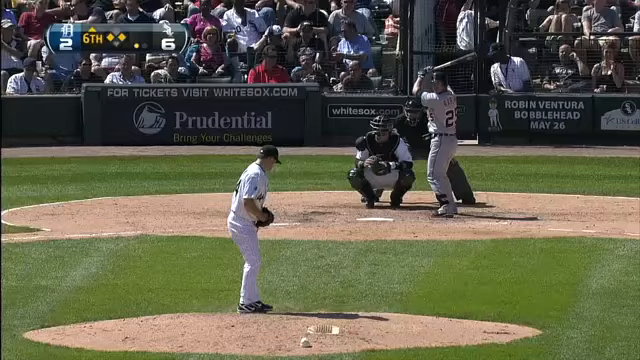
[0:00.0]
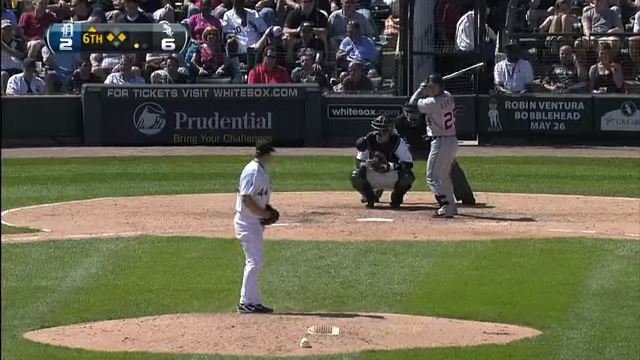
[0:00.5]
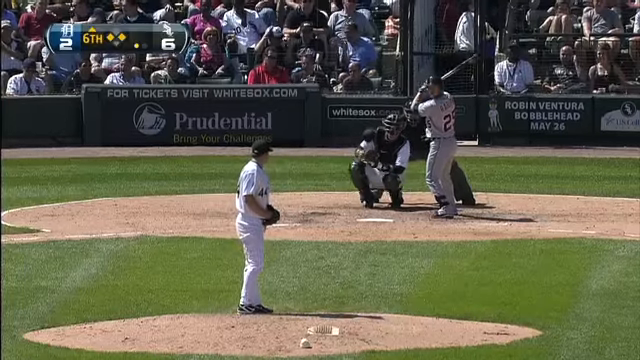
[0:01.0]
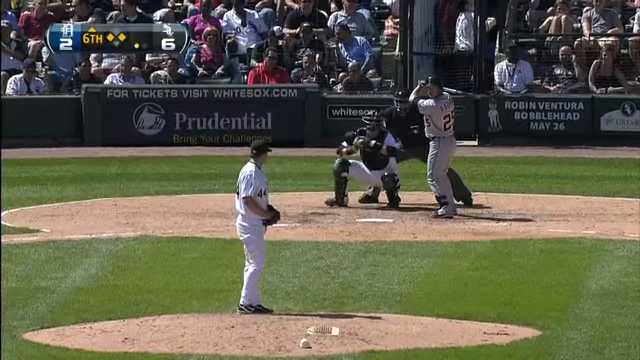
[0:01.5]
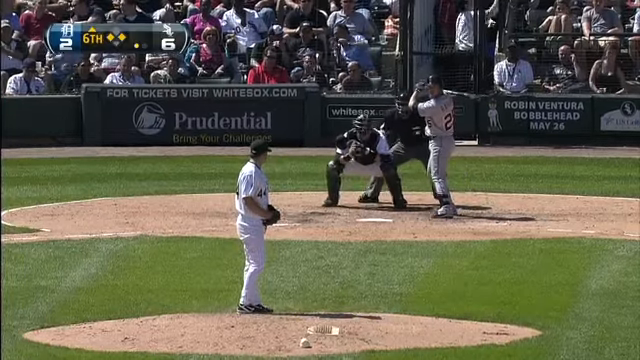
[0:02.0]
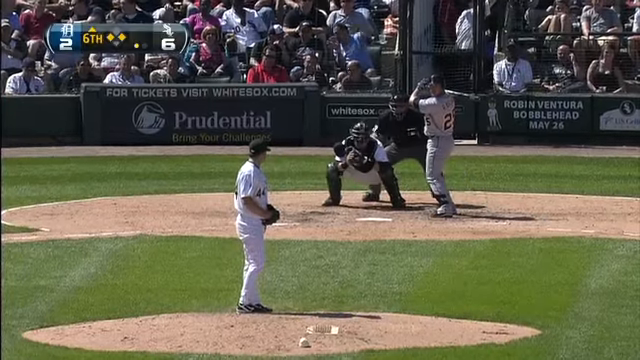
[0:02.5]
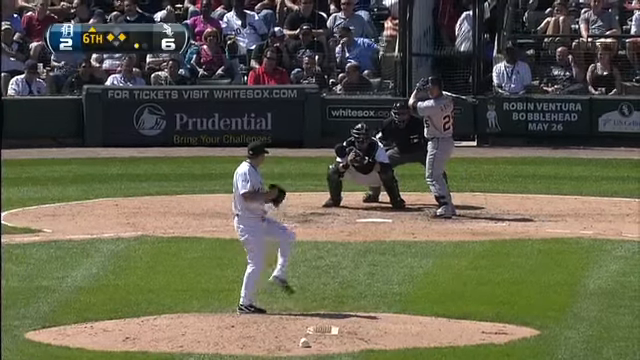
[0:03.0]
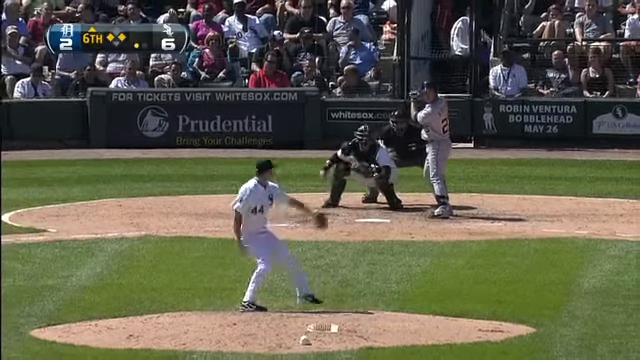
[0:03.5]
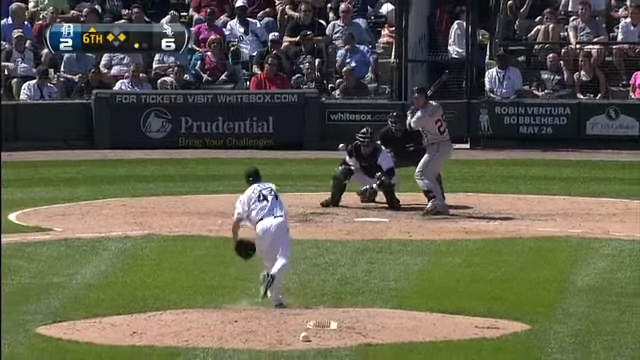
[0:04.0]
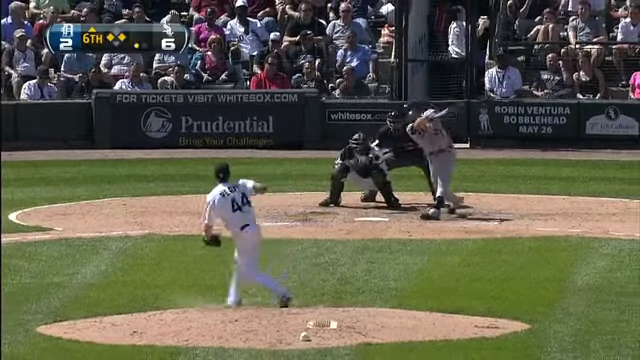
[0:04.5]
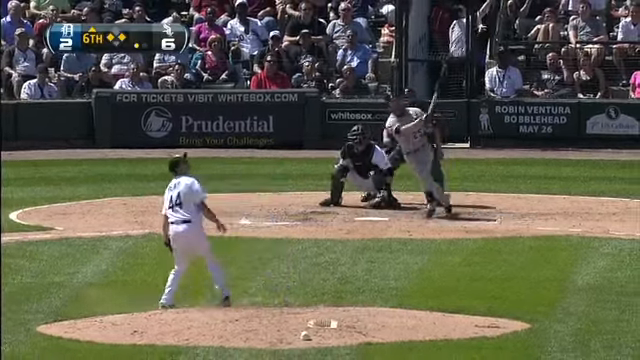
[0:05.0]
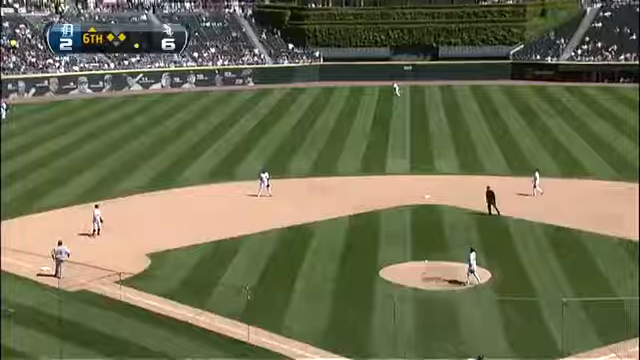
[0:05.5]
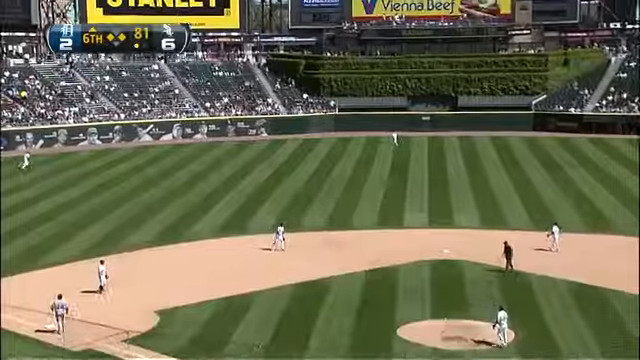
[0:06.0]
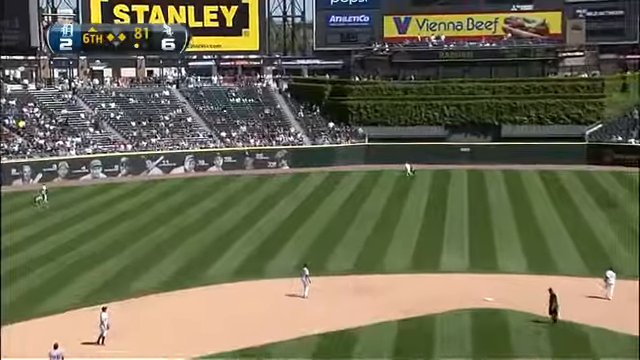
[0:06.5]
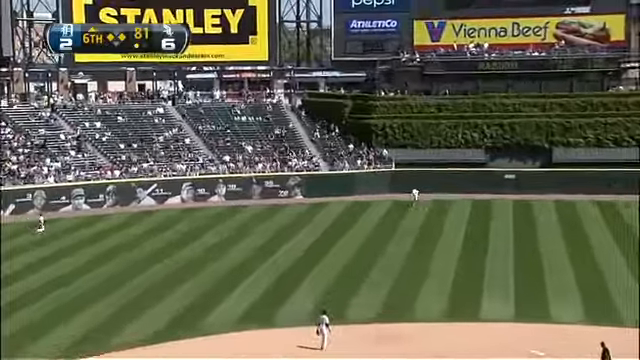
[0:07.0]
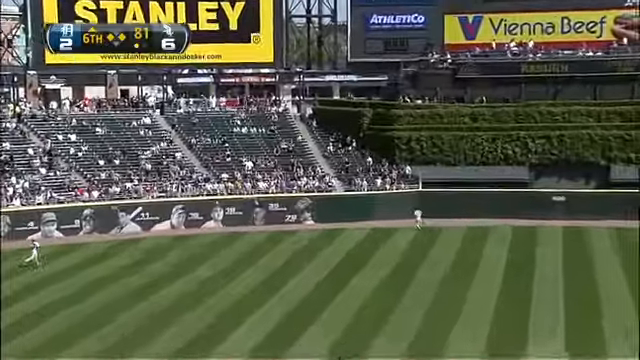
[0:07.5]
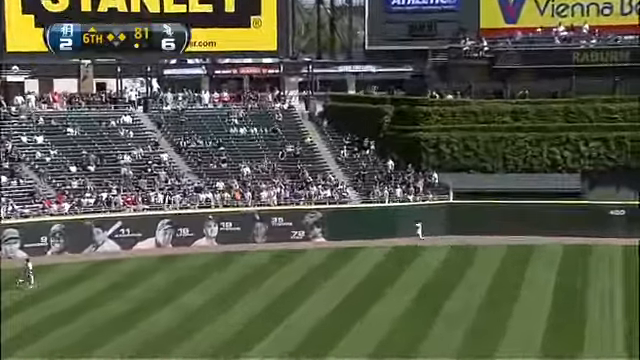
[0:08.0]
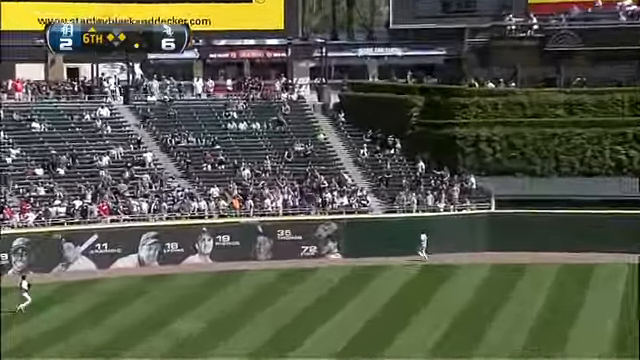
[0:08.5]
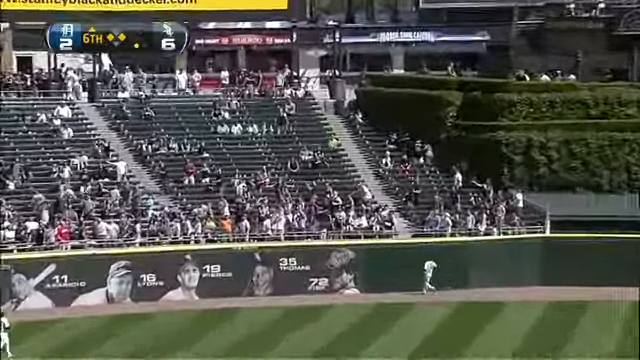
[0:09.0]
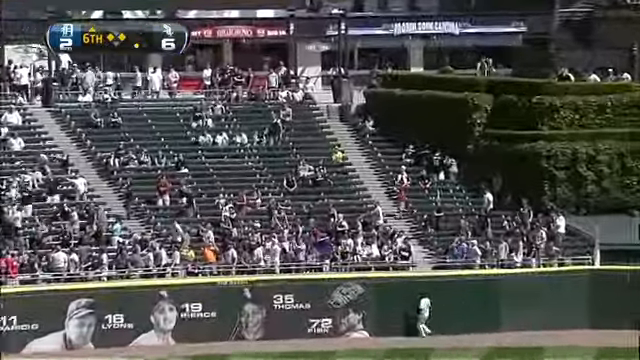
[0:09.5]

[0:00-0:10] Four males appear in the video, including a batsman and a bowler. The batsman hits the ball and it flies out of the field. The cricket field has green grass with patches of dust and sand. The players wear white gear: white long pants and white shirts. One player's shirt has the number 44 written in black on the back. They also wear white shoes as well as black caps and black shoes. It is a sunny day. The spectators sit watching the game excitedly; their side seems to be winning, and they clap and hug each other.